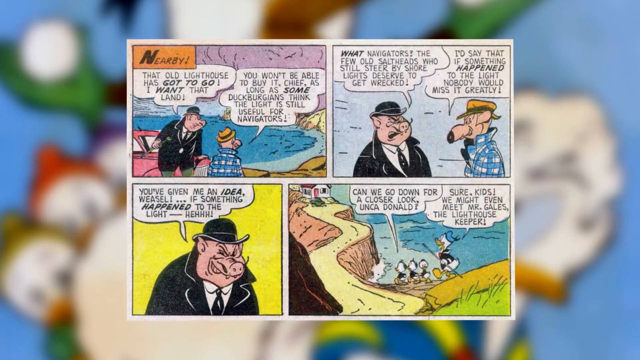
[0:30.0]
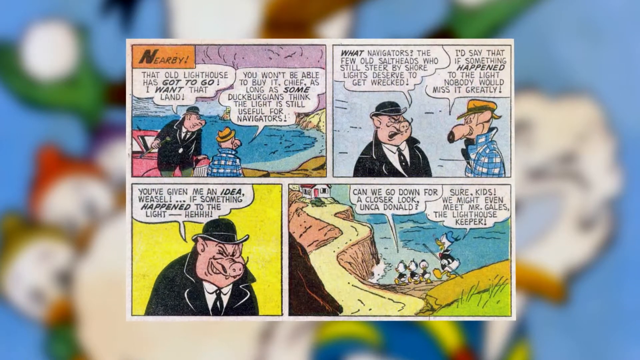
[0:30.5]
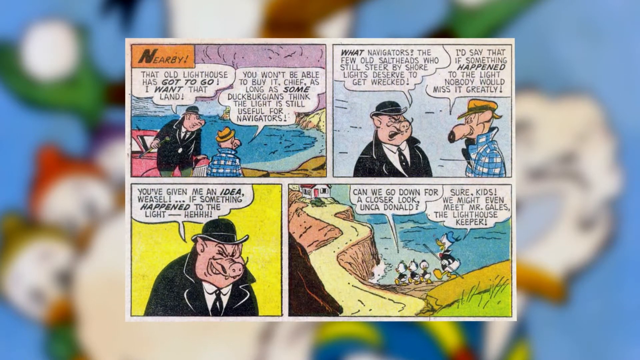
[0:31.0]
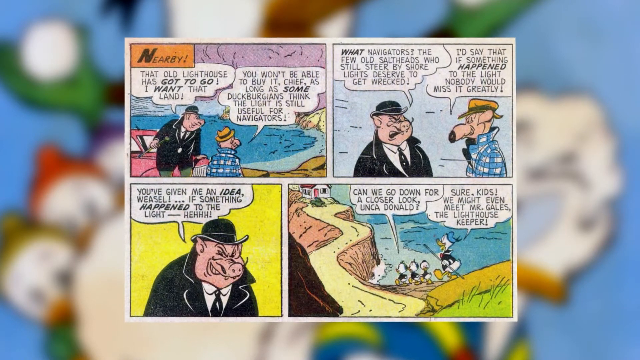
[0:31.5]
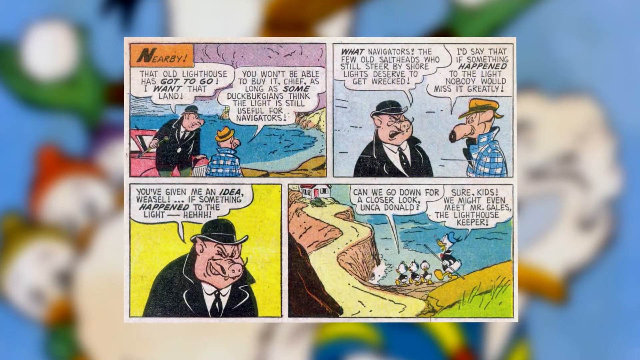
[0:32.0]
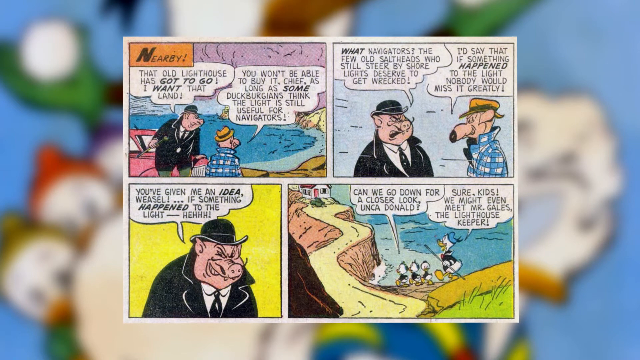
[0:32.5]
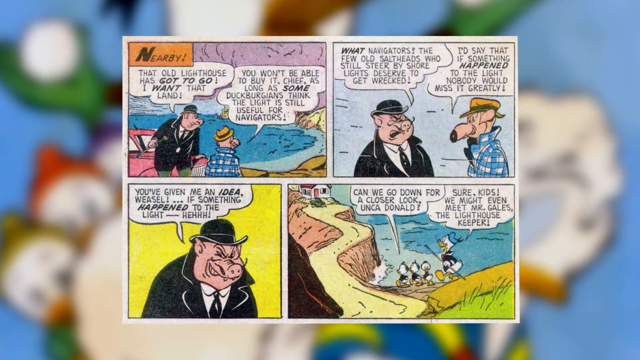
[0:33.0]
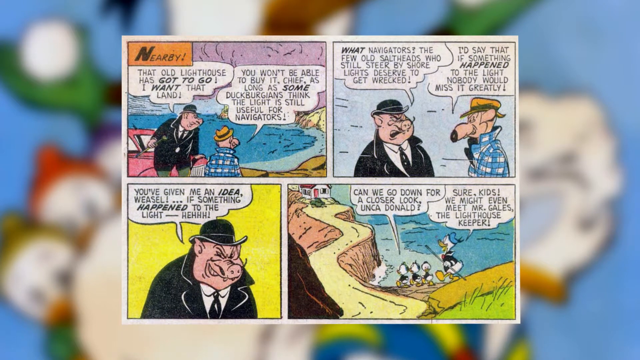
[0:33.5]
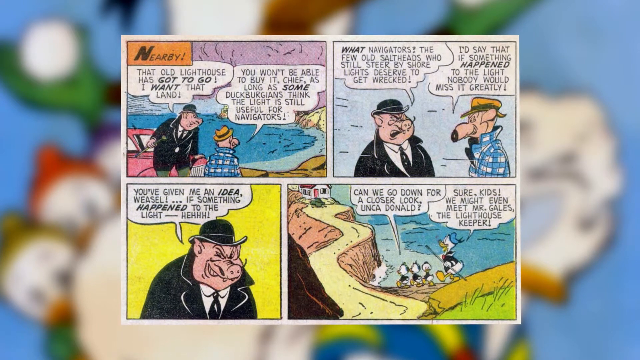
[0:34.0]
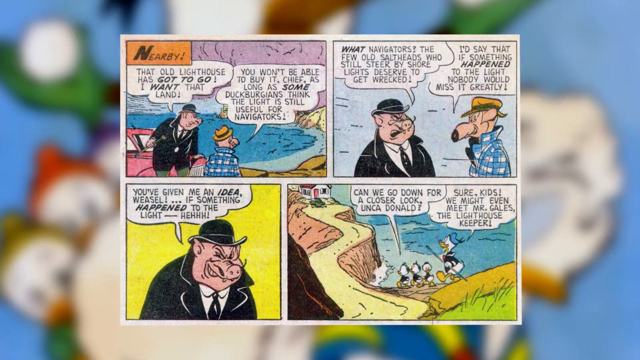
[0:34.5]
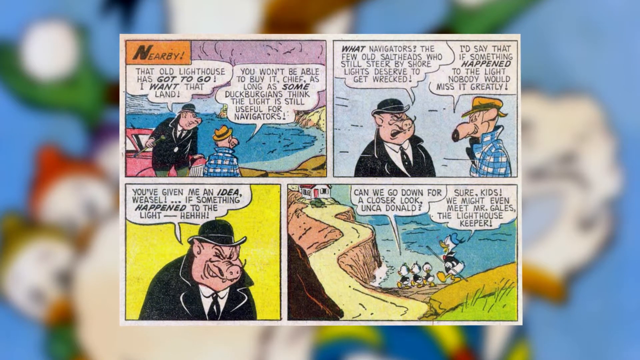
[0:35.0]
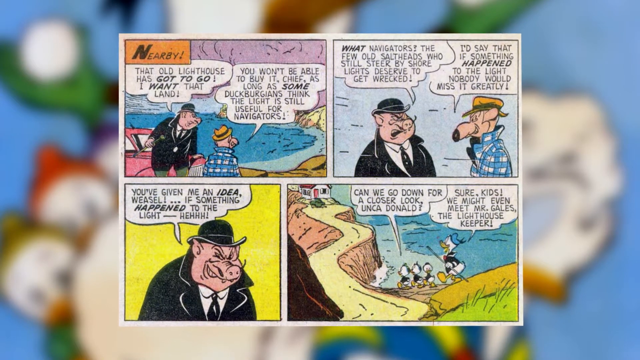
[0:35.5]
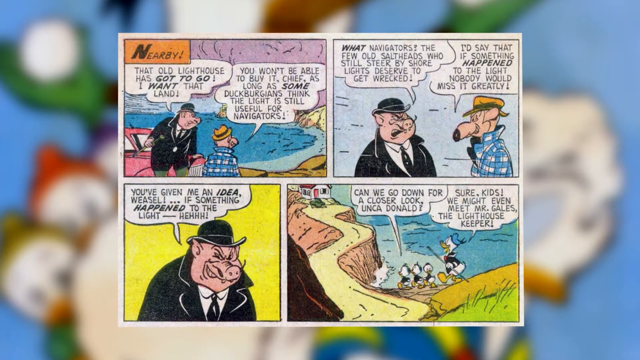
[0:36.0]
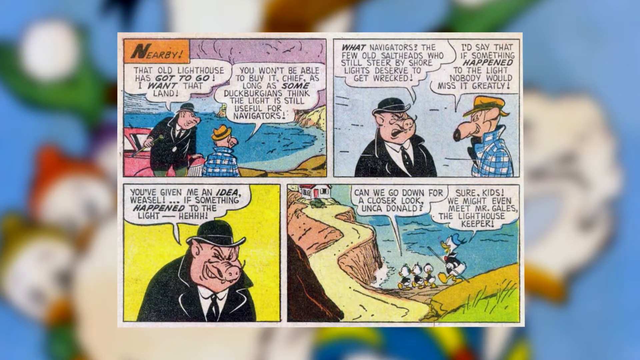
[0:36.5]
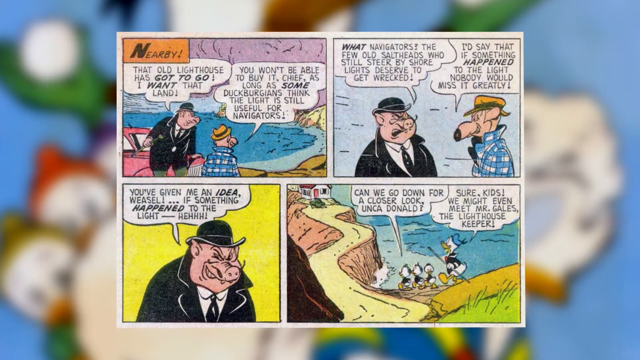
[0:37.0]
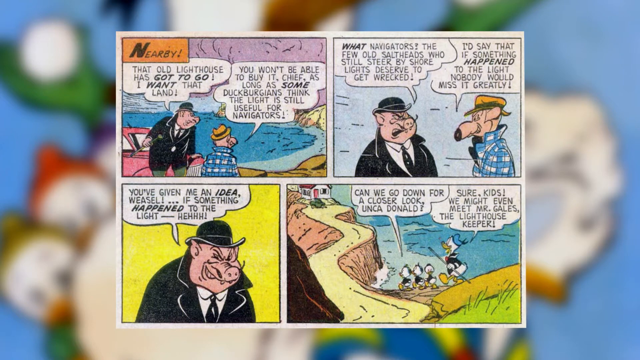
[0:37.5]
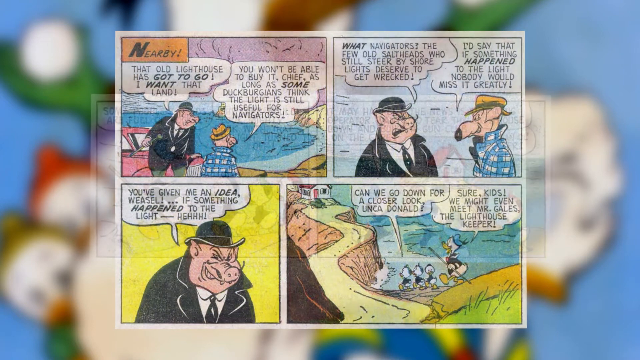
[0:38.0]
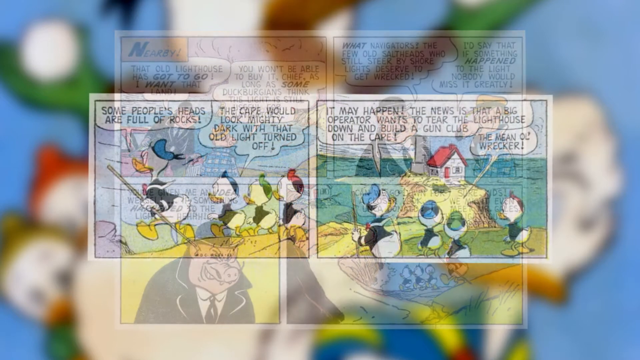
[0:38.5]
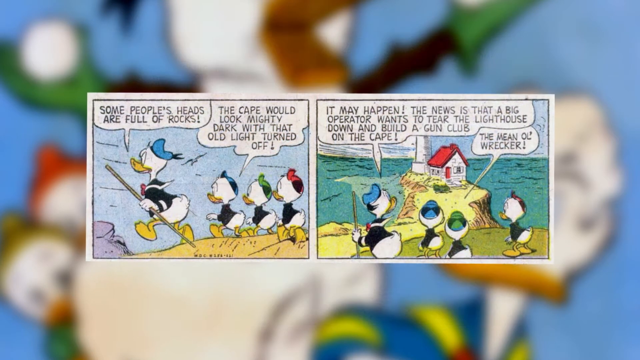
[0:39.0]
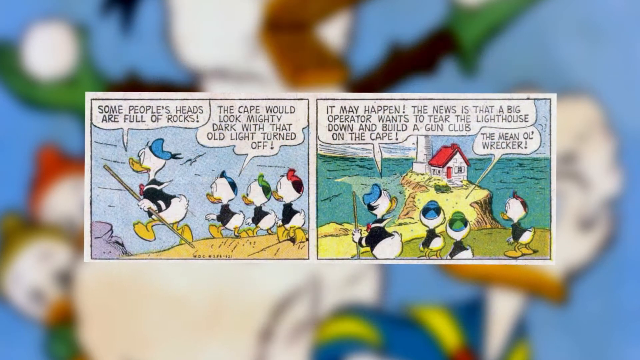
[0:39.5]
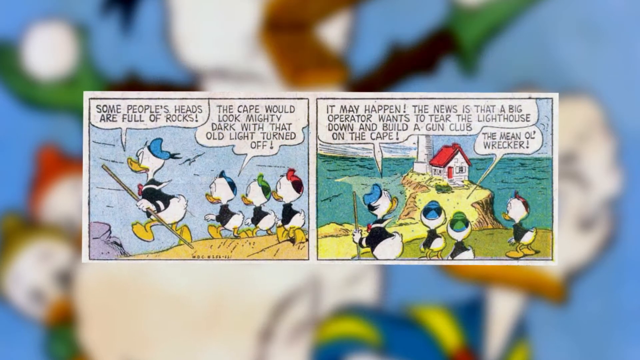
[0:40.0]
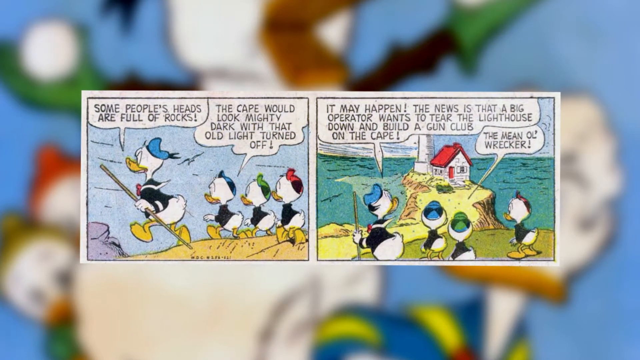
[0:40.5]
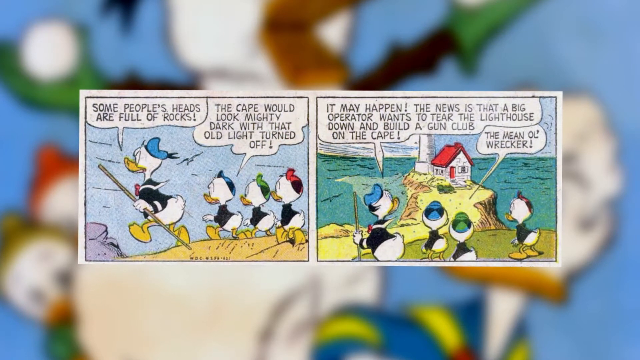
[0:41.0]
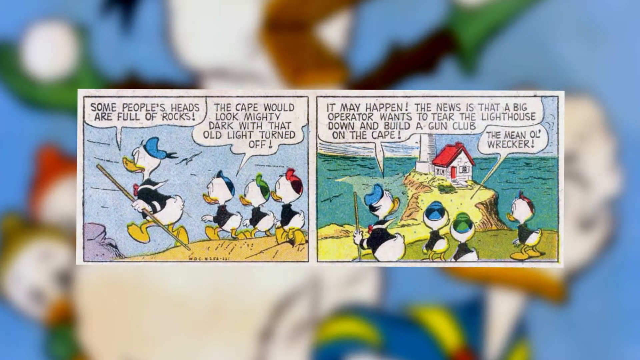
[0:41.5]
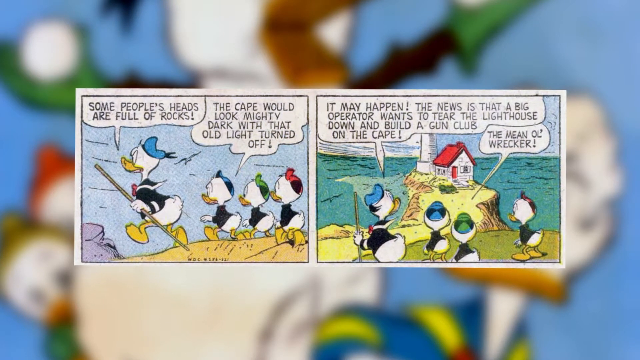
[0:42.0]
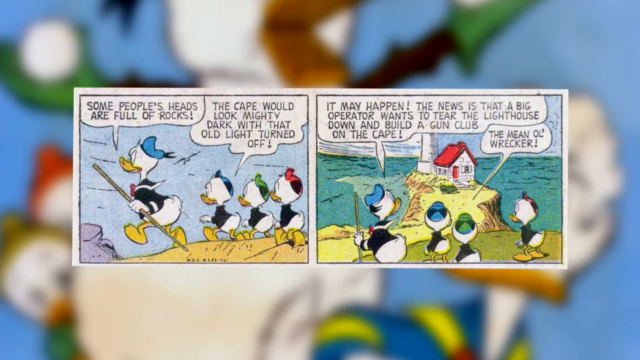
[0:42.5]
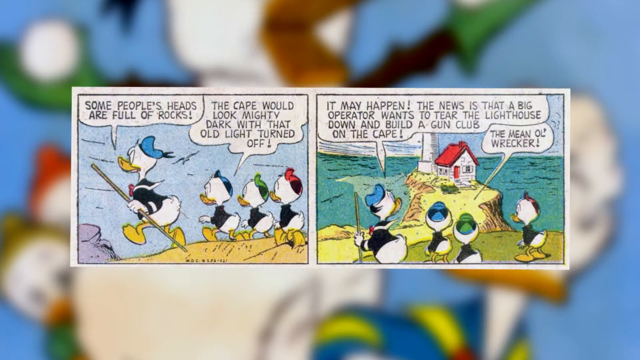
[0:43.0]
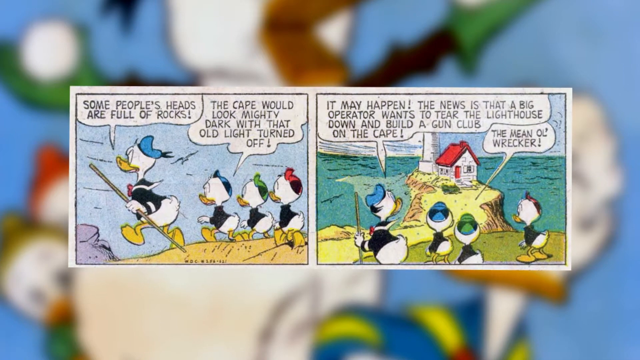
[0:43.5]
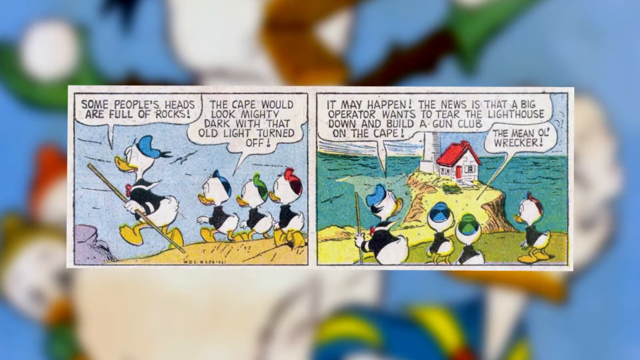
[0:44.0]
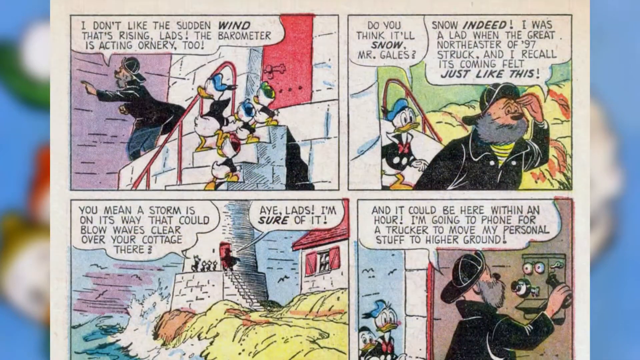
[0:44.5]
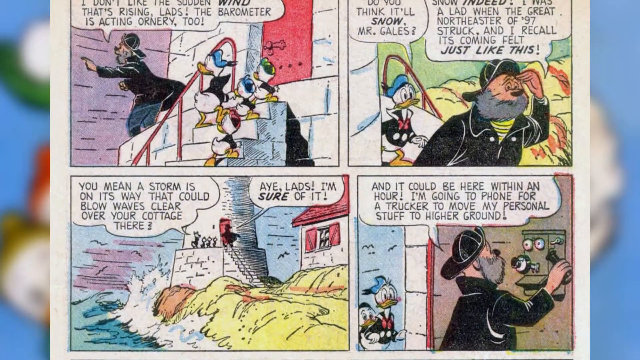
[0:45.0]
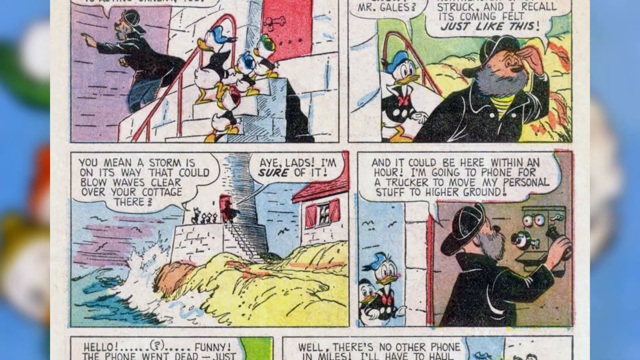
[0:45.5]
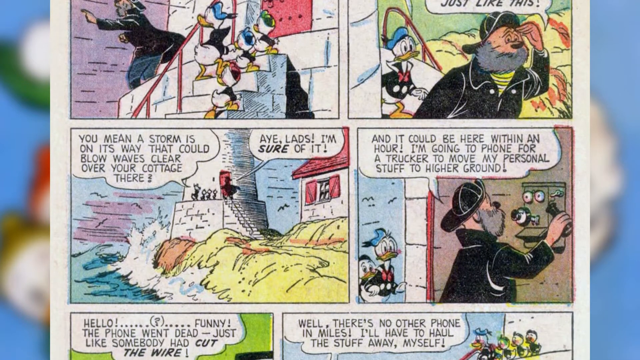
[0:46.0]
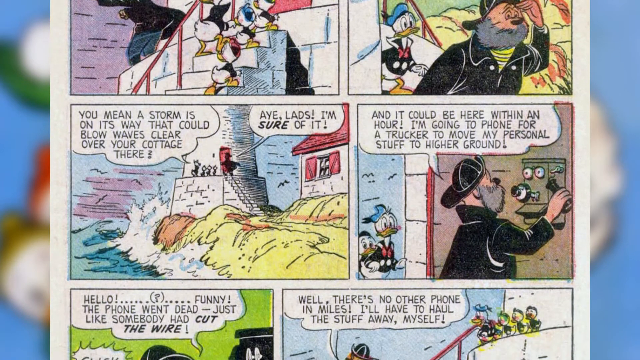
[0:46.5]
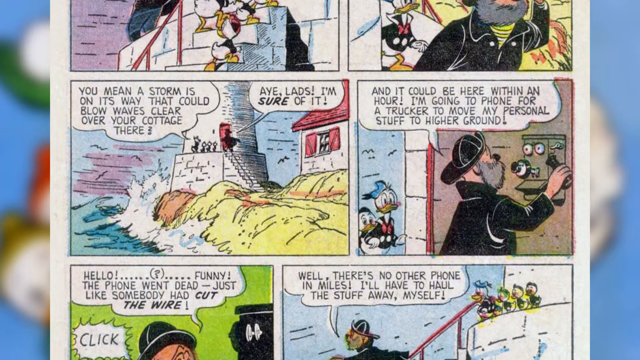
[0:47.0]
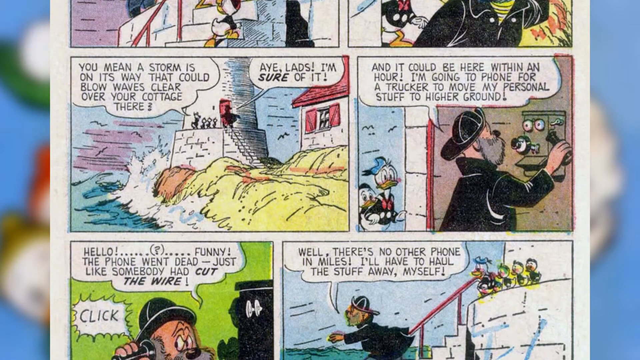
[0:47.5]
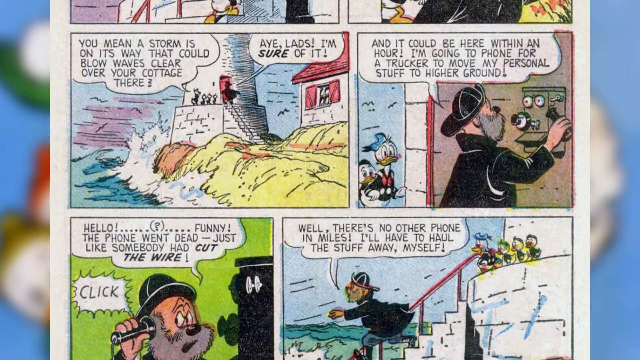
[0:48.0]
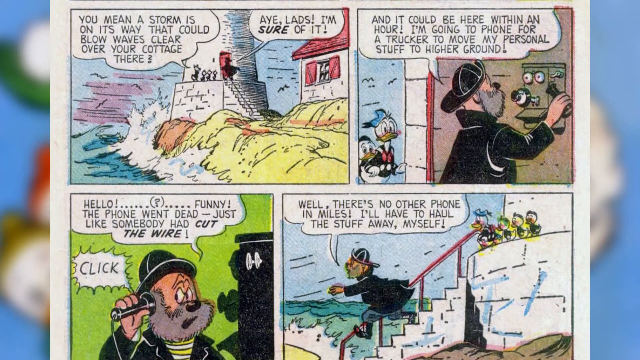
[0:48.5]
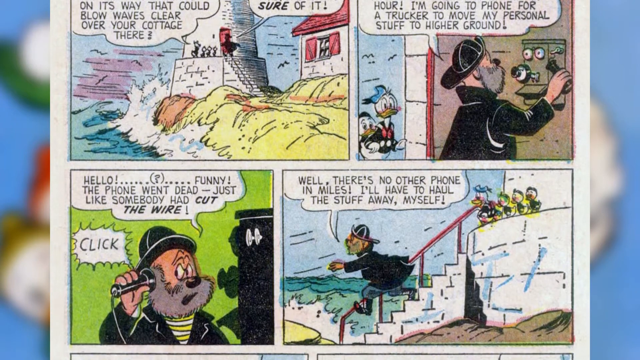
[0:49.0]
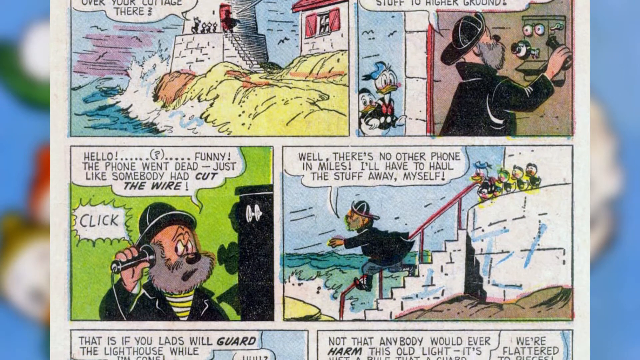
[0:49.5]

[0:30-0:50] Several scenes show a pig kind of dressed like a businessman, who seems to be the main one wanting to get rid of the lighthouse because he wants the land it is on; he is trying to come up with ways to sneakily get the lighthouse off the land. Donald Duck and the three little ducks head toward the lighthouse, journeying to the land as they discuss why they want to save it. The video shows the different images of the comic strip as the story plays out. As the ducks reach the lighthouse, they apparently meet the lighthouse keeper, who is preparing for an upcoming storm that could damage his cottage next to the lighthouse.